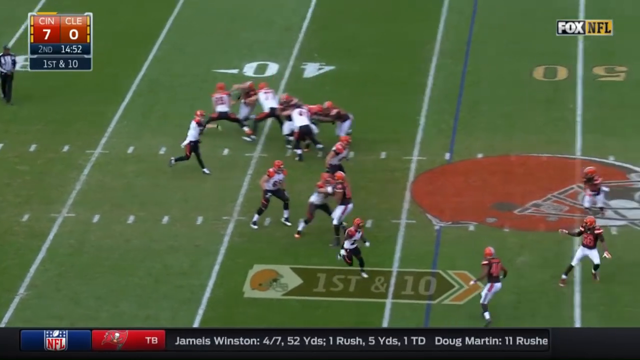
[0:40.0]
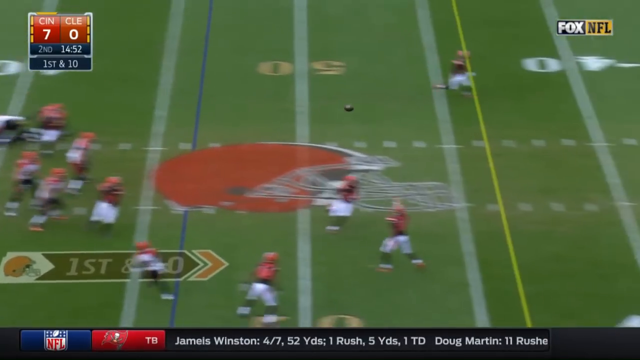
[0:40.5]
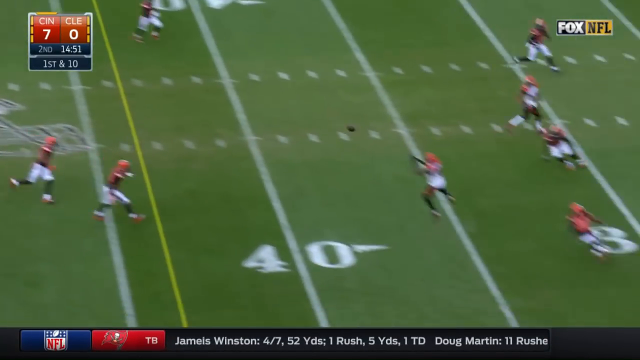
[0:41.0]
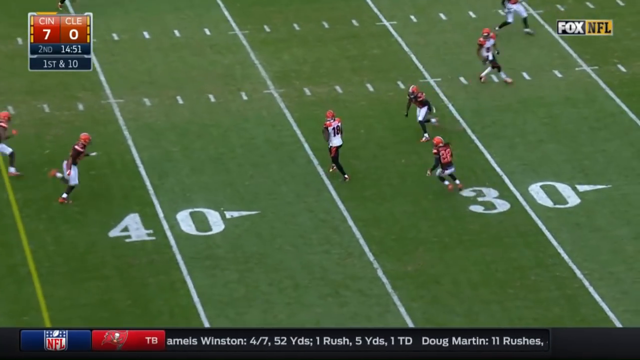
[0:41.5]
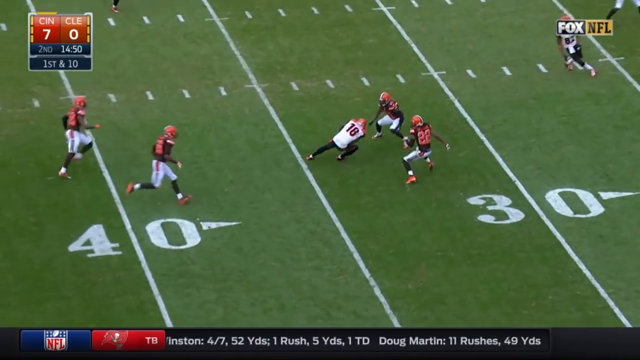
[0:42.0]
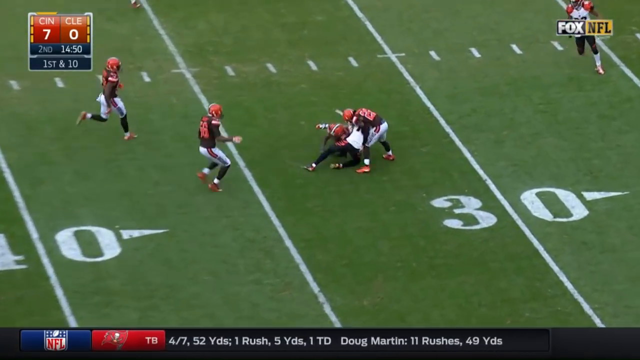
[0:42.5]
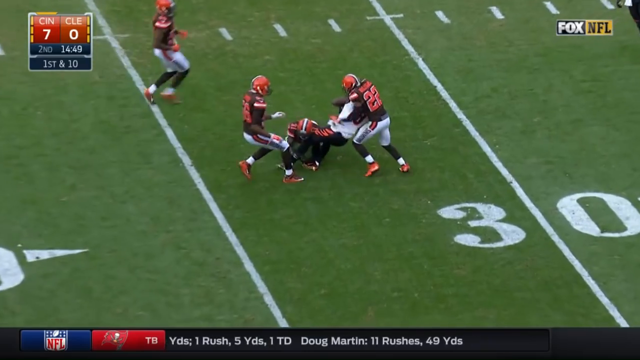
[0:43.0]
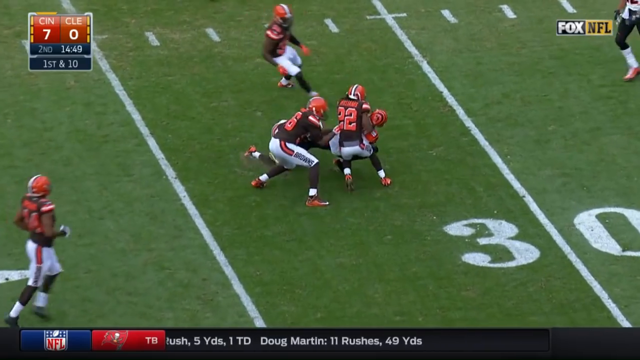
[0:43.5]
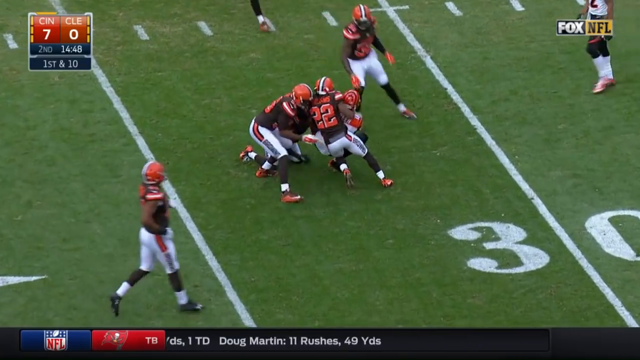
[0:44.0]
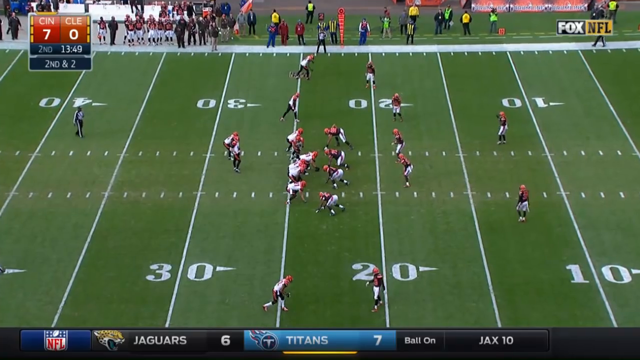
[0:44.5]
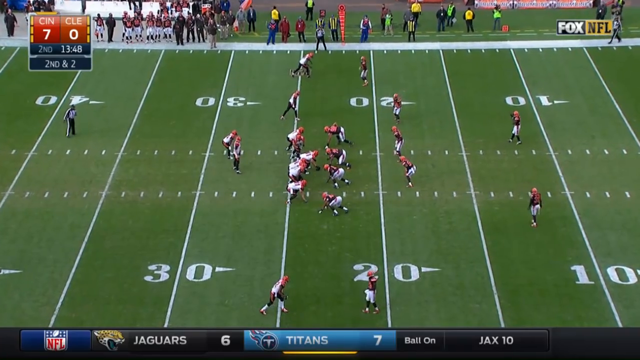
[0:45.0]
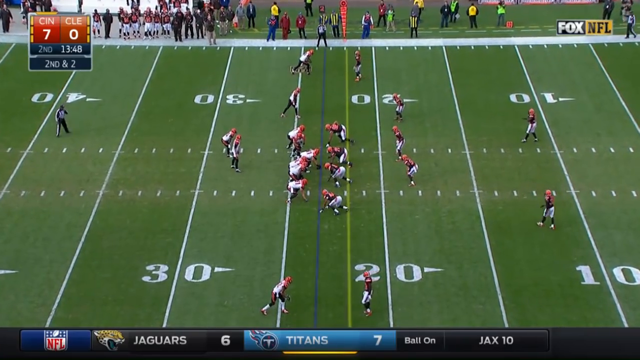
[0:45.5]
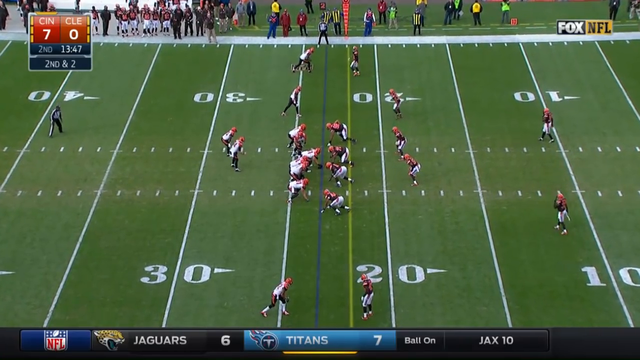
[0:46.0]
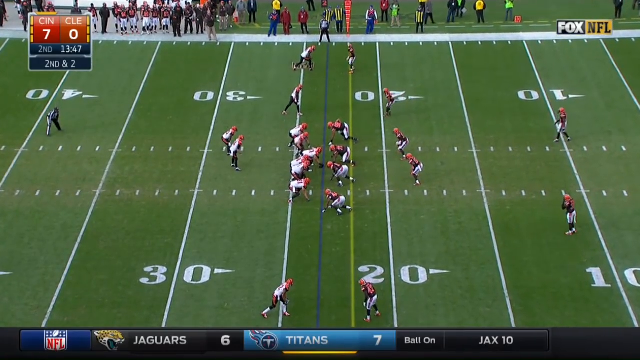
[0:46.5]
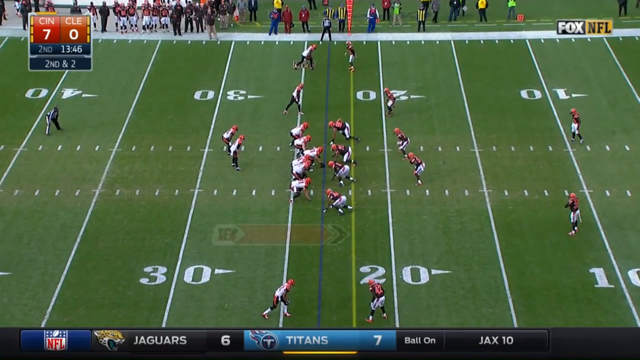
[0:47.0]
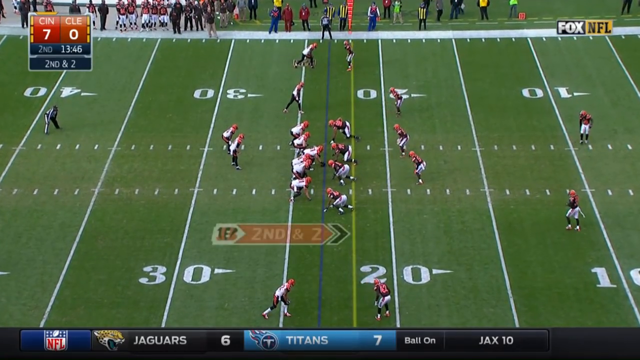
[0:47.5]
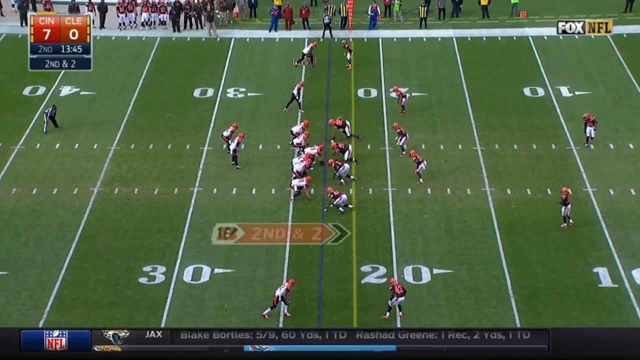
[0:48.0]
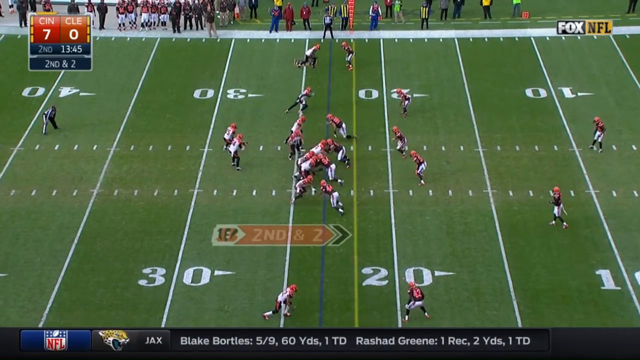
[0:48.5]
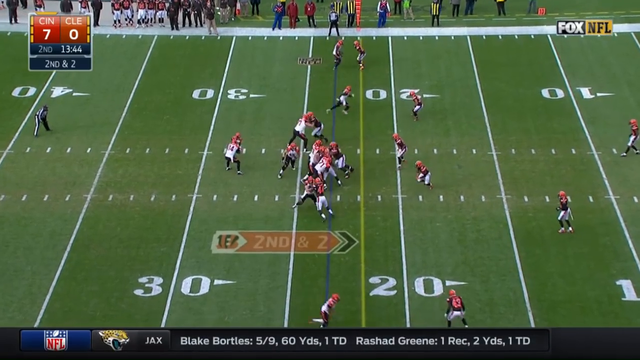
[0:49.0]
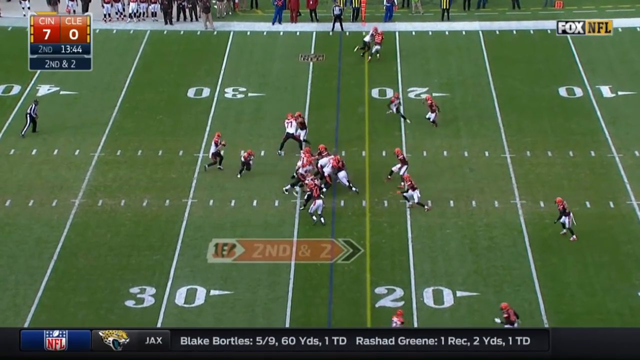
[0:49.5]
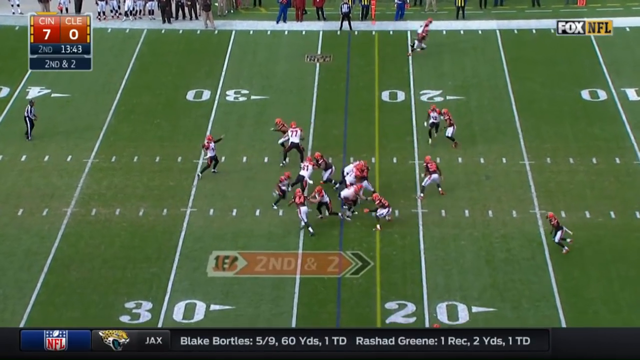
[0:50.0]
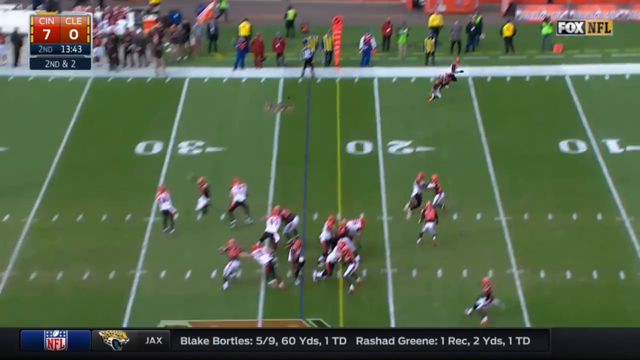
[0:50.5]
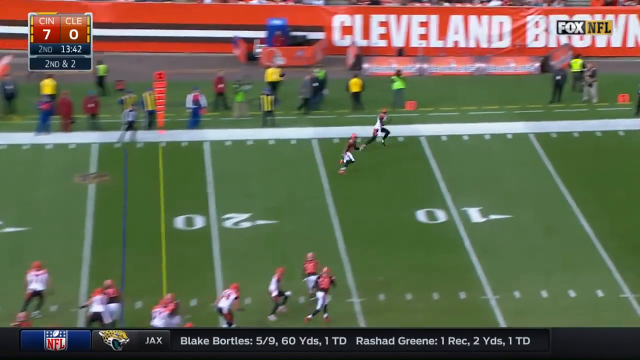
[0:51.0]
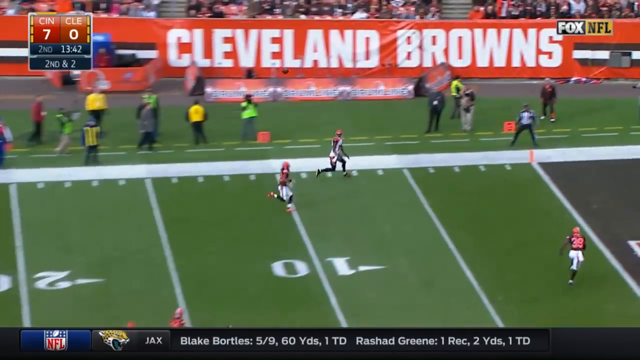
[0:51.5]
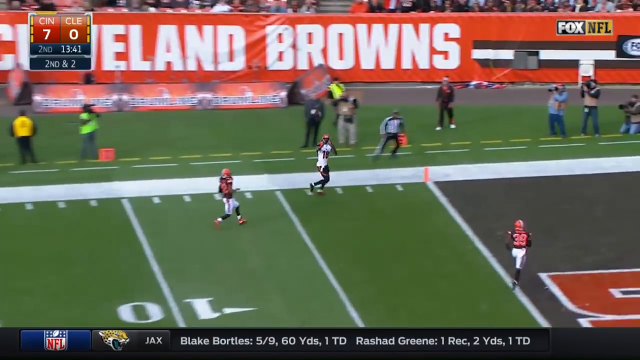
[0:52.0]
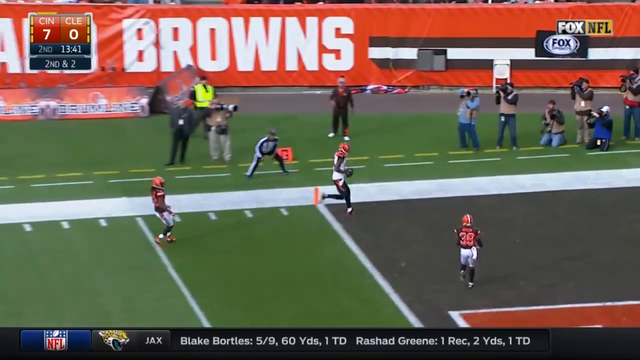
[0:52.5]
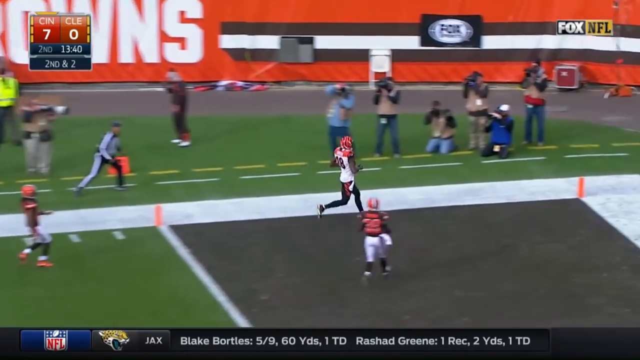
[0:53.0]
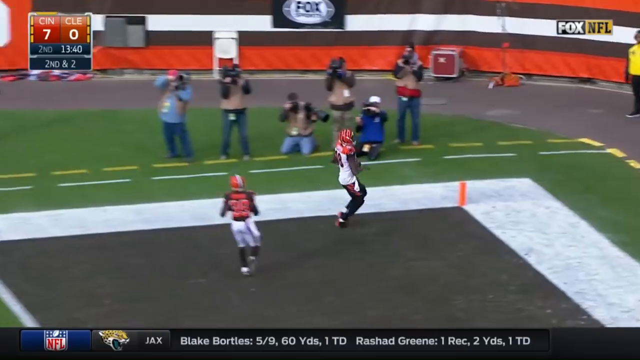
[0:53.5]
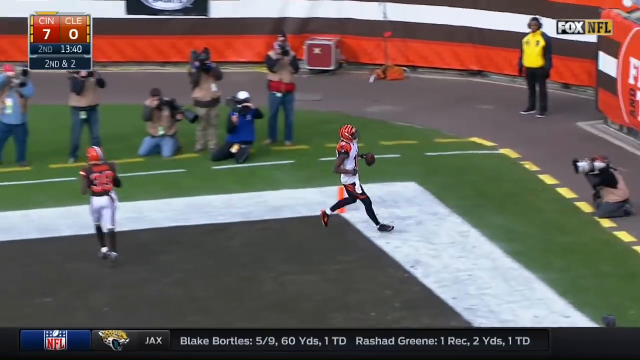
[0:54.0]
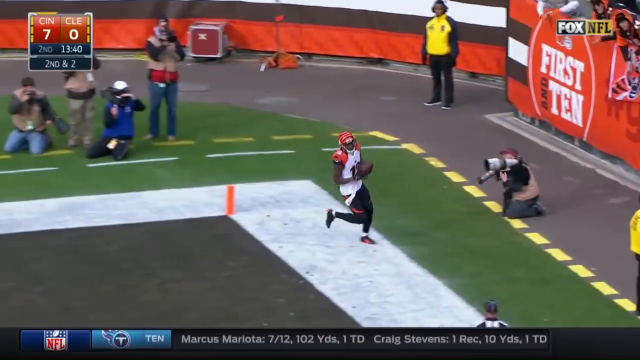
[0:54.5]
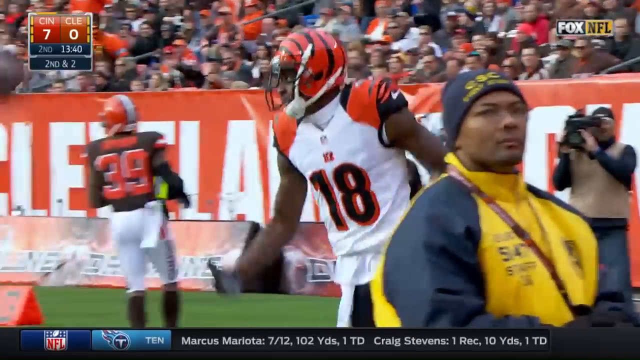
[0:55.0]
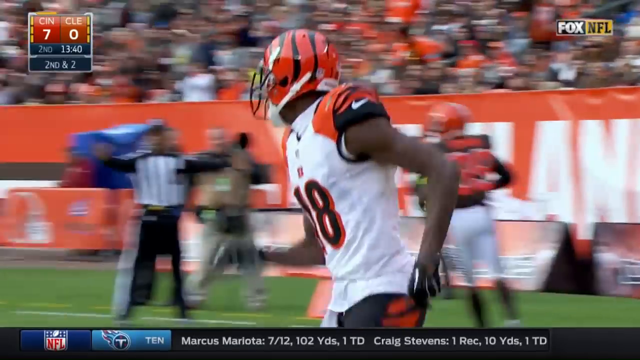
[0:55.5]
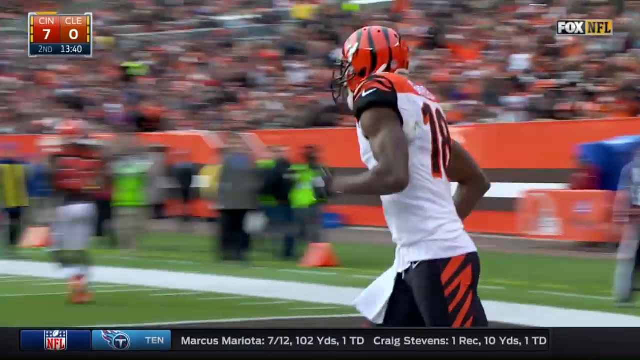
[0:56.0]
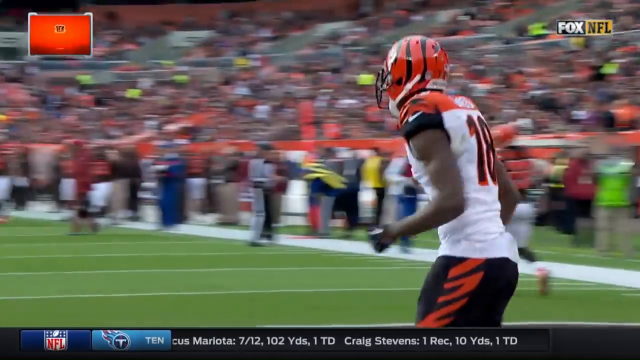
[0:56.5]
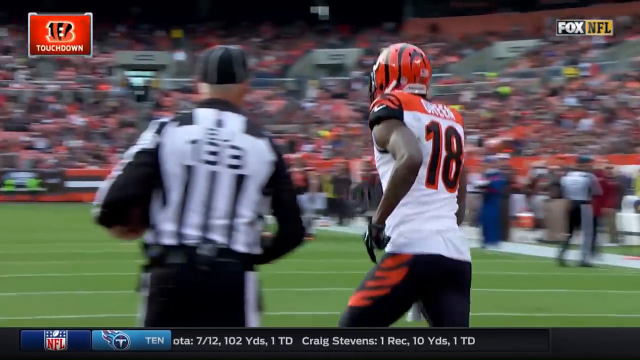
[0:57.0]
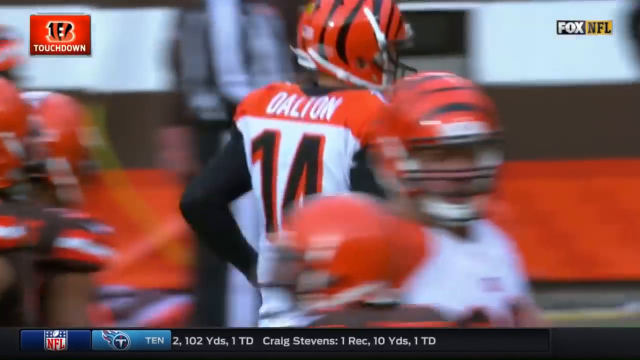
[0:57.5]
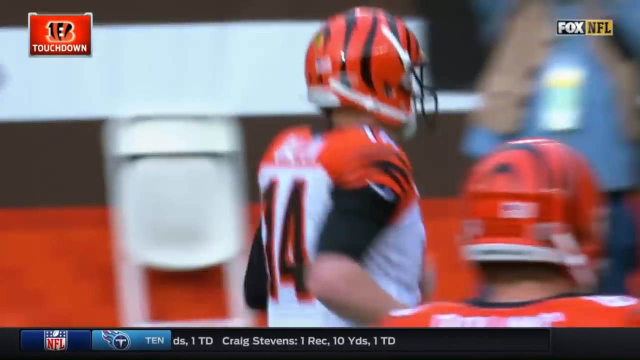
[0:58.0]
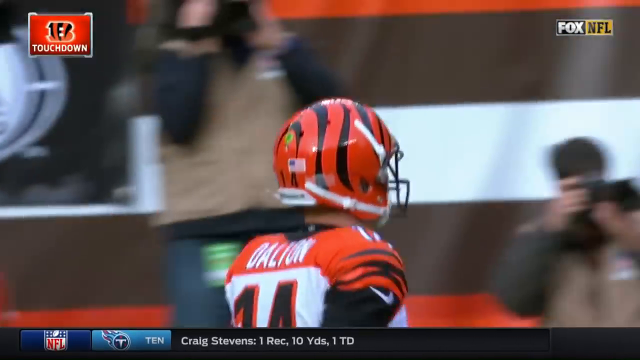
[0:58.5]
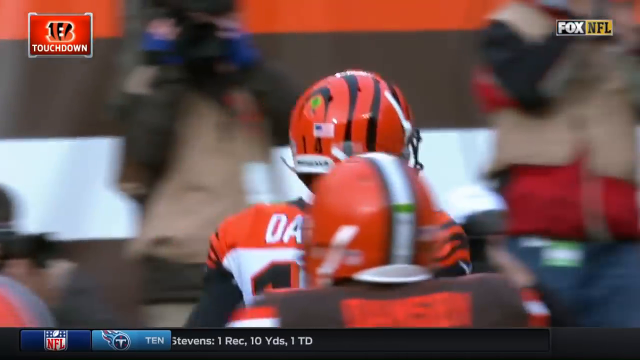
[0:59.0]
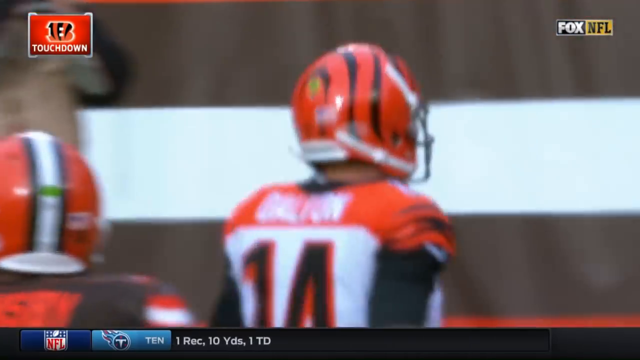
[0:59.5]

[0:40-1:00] In the next highlight, Cincinnati passes downfield, and it looks as though number 18 catches the ball. Dalton passes a third time to a completely unmarked receiver, number 18, Green: three passes attempted, three completed. Green, a very tall wide receiver, scores a touchdown at the beginning of the second quarter, the Bengals' second touchdown of the game. As the Bengals celebrate, stats appear for Tampa Bay quarterback Jameis Winston: four completions from seven attempts for 52 yards, one rush for five yards and one touchdown pass; teammate Doug Martin has rushed 11 times for 49 yards. A score from another game shows the Tennessee Titans leading the Jacksonville Jaguars 7 to 6.